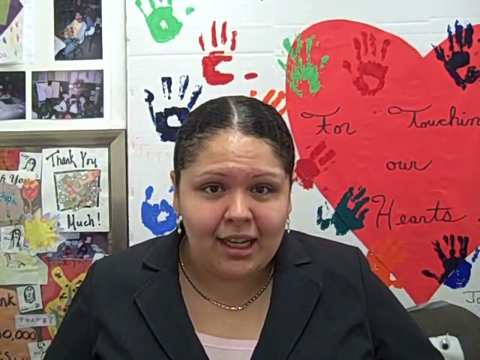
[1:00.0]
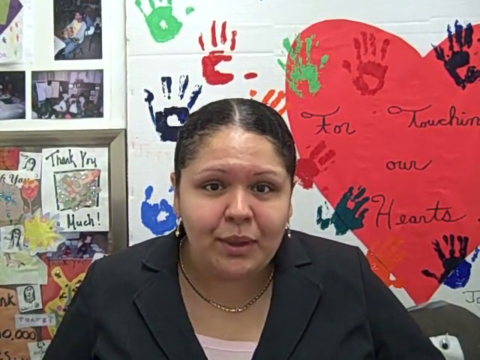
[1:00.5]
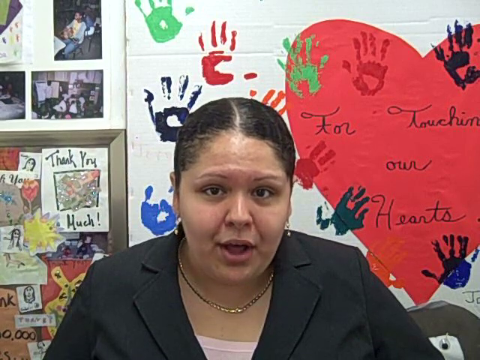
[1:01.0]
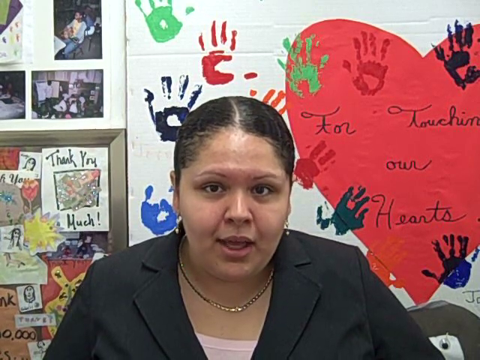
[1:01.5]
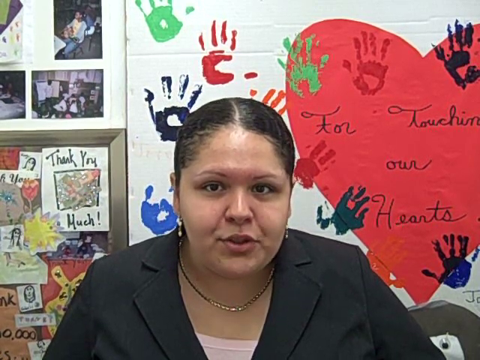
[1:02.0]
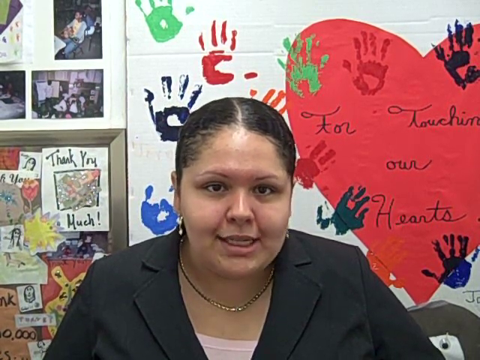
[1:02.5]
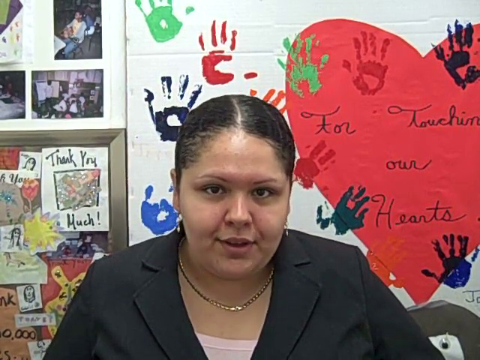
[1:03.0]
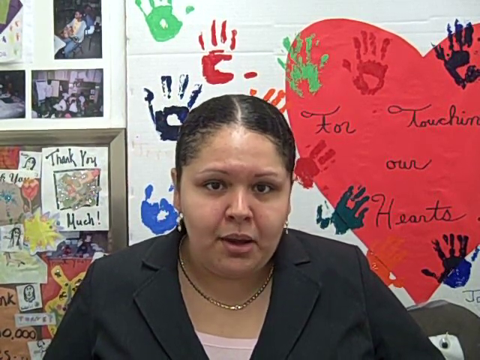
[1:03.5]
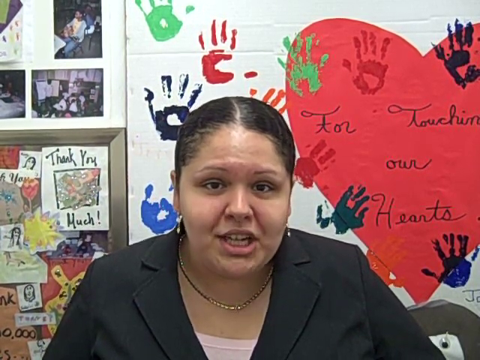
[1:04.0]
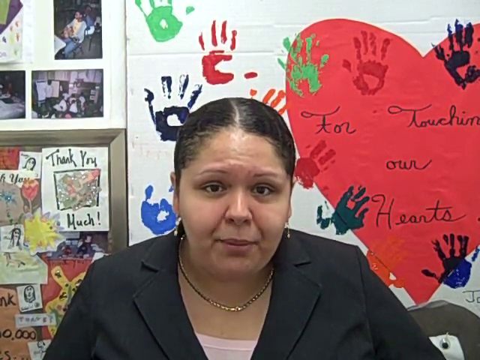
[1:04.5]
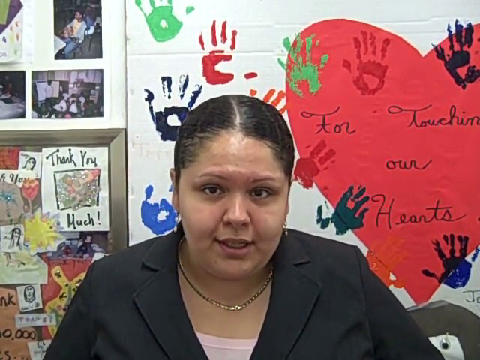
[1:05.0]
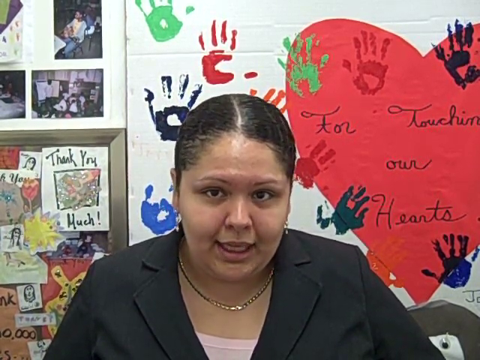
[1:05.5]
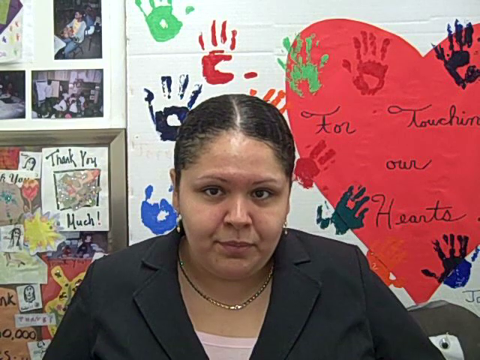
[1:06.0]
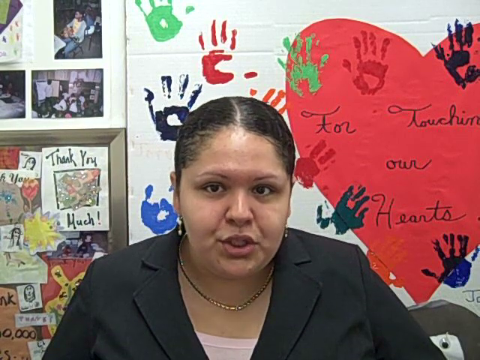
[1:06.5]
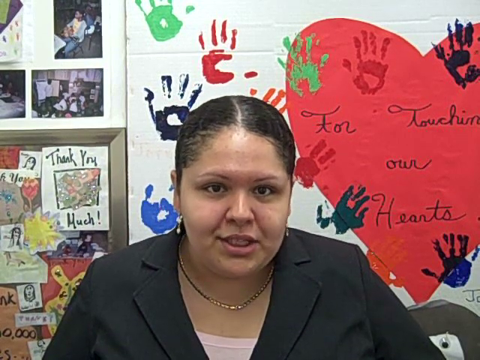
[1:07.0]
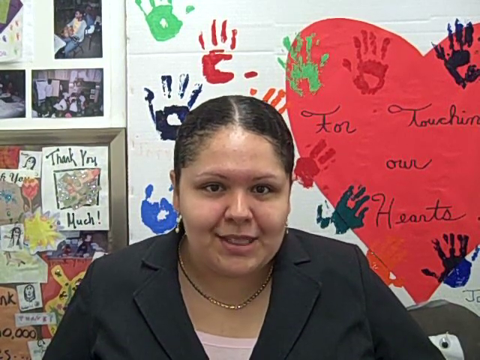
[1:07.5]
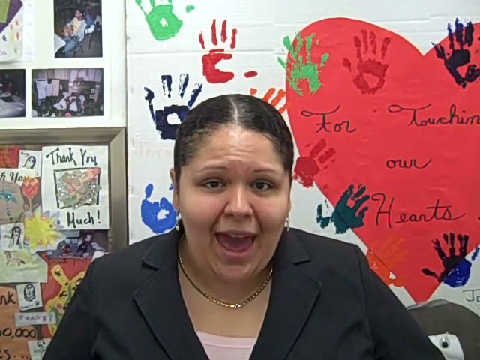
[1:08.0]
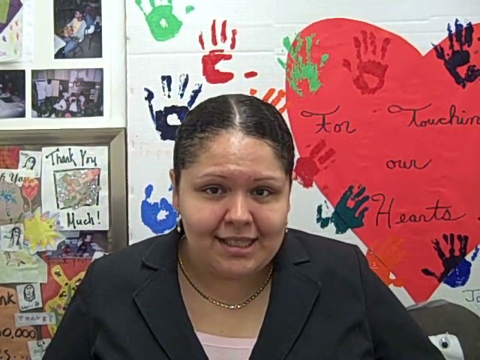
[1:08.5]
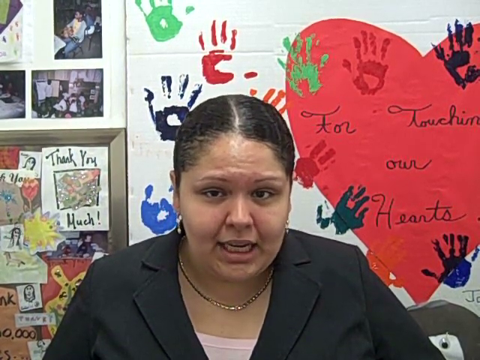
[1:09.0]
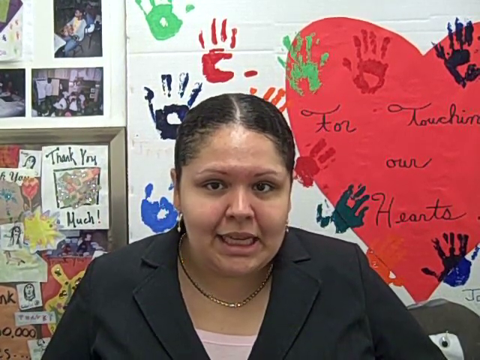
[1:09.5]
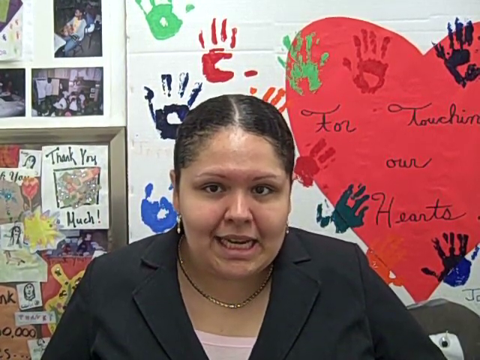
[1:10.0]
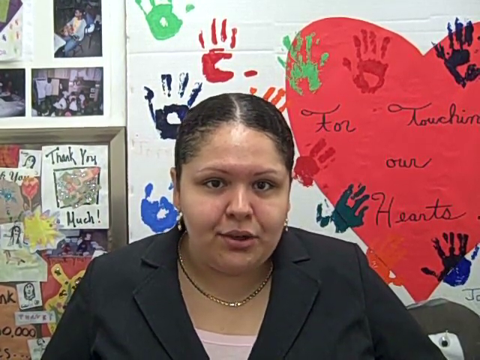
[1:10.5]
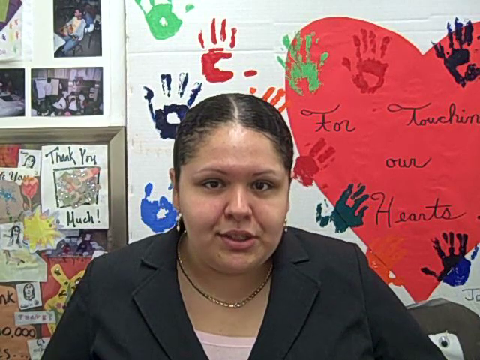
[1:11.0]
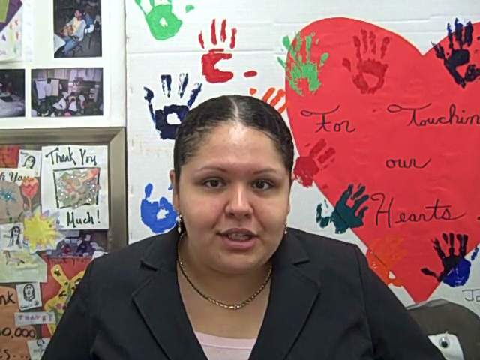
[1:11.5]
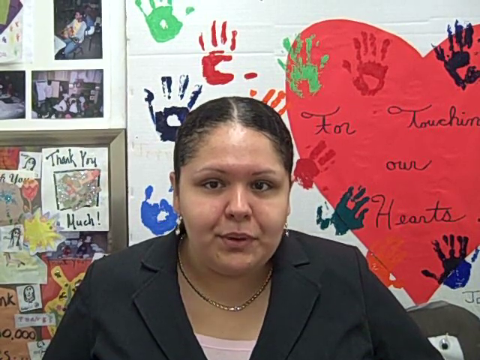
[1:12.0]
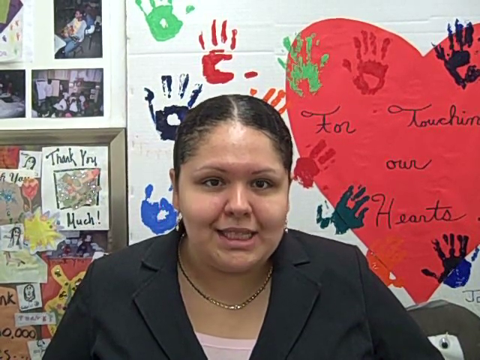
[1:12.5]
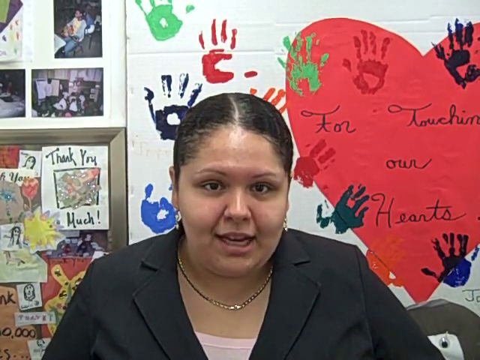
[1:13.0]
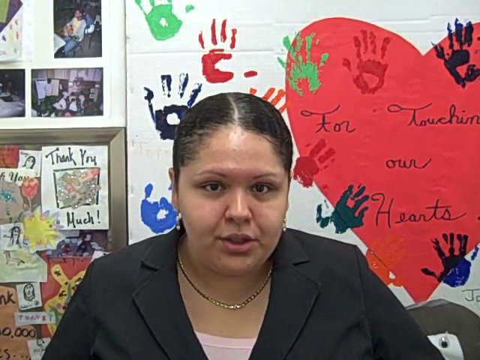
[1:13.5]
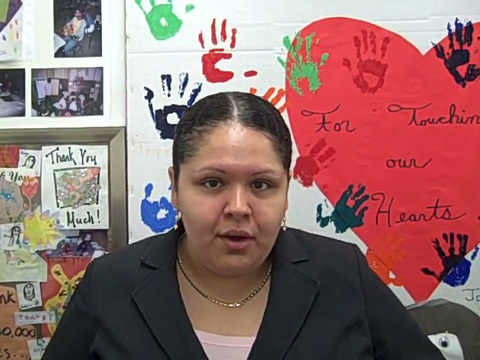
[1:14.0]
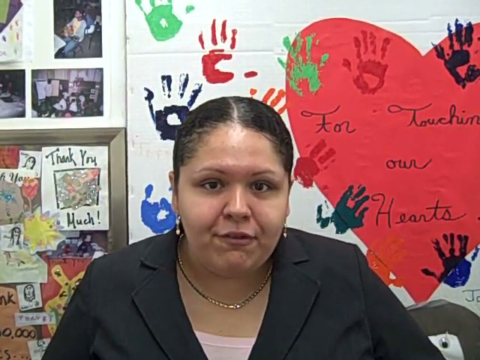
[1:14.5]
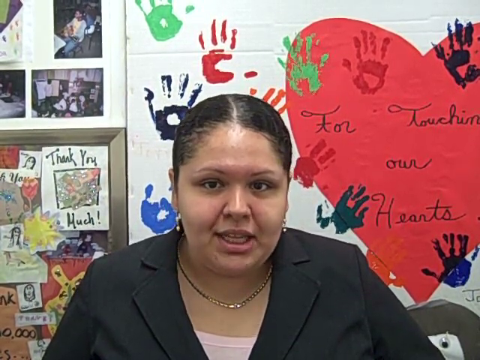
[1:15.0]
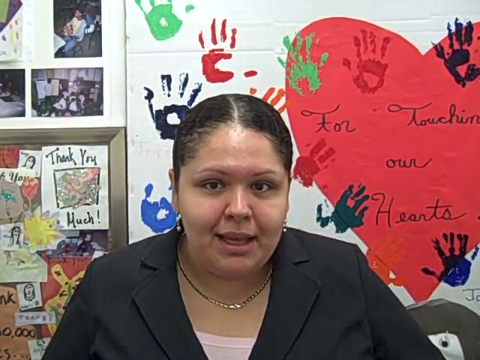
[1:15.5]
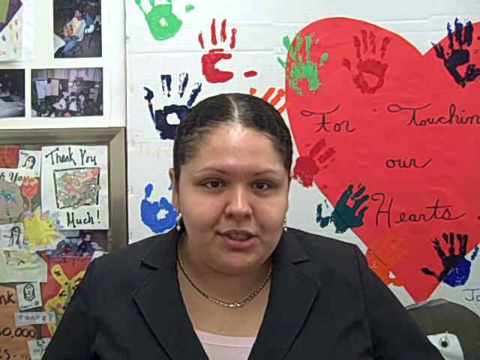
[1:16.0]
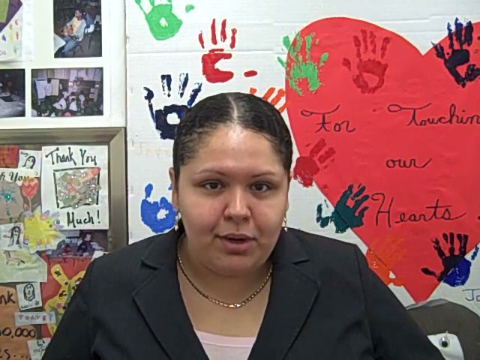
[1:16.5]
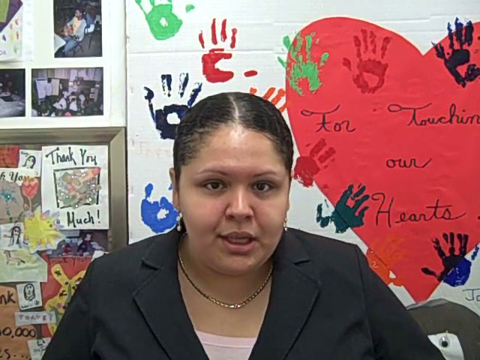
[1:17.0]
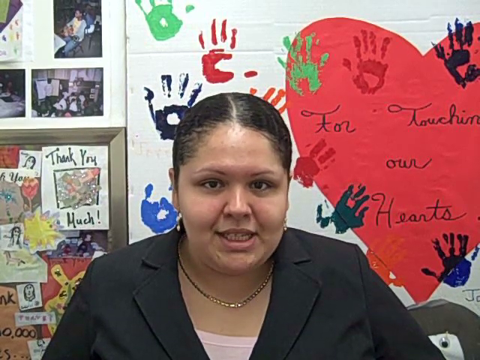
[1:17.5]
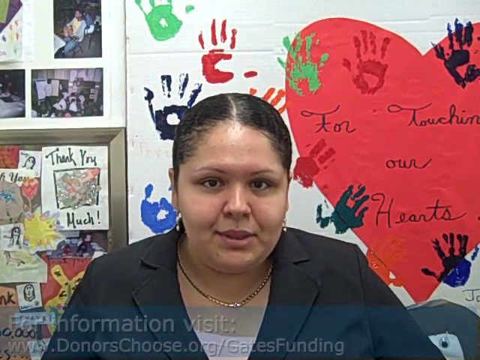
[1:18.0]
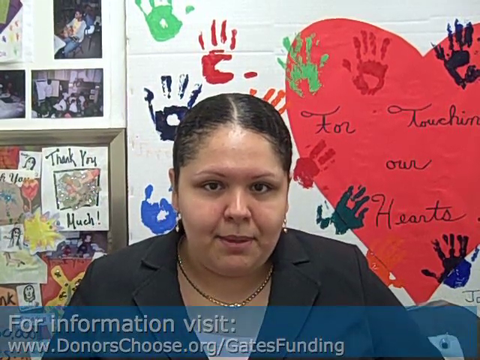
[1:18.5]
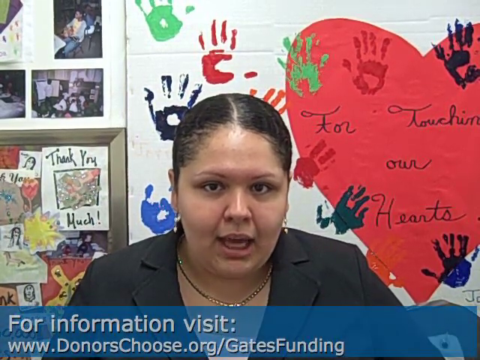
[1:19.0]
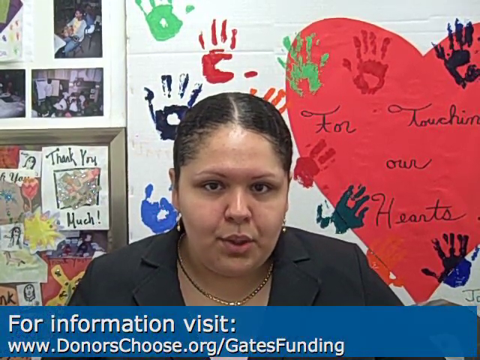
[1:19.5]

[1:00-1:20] A woman sits in her office, wearing a black blazer, a thin, small golden necklace, and earrings that look silver. She looks somewhat like a teacher. Behind her are various kinds of artwork, probably from people she helped or maybe from her students. Information appears at the bottom of the screen saying to visit "donorschoose.org/gatesfunding" for information. The artwork includes colorful handprints and a big paper heart with text that says "for touching our hearts". To the left of her are some smaller drawings and a card that says "thank you much". At the top left of the screen is a picture of a man sitting in a chair, another picture showing some kind of class, and a third picture that is partially cut off and cannot really be seen.